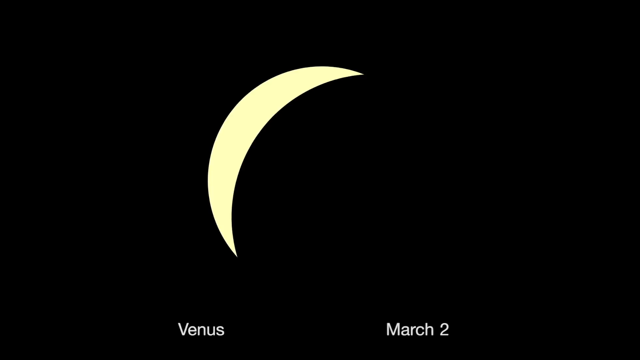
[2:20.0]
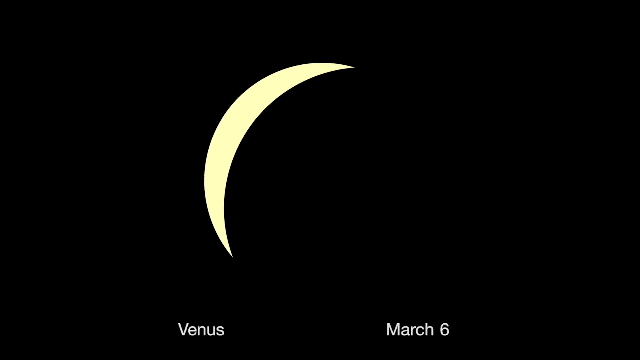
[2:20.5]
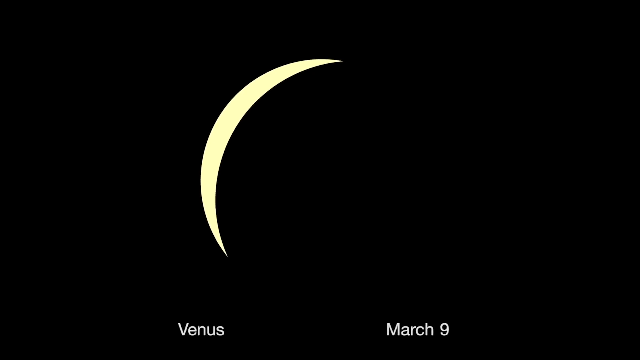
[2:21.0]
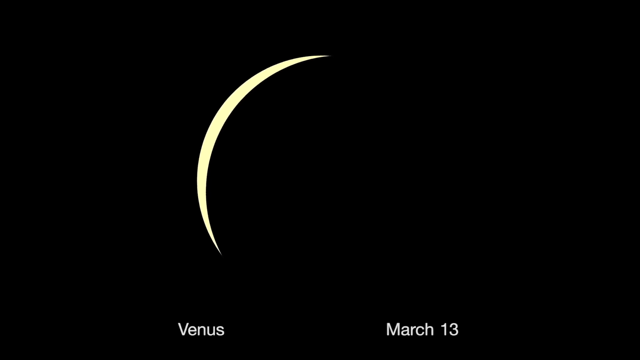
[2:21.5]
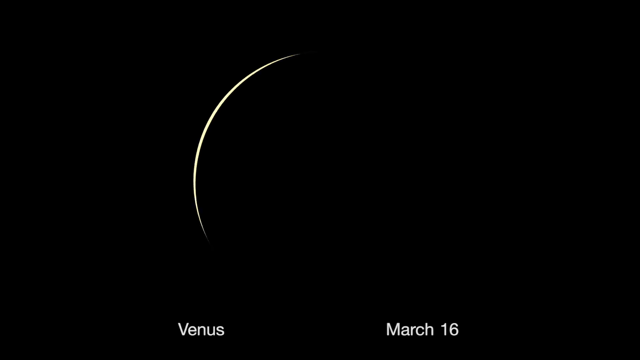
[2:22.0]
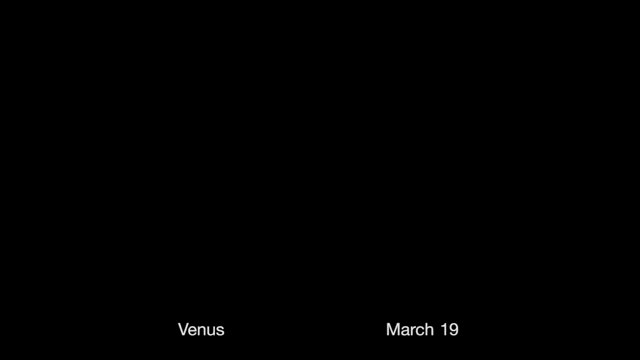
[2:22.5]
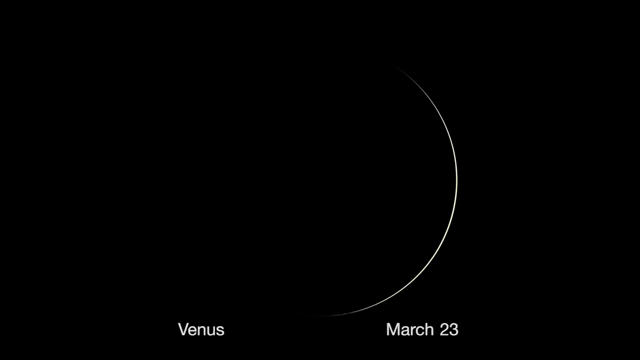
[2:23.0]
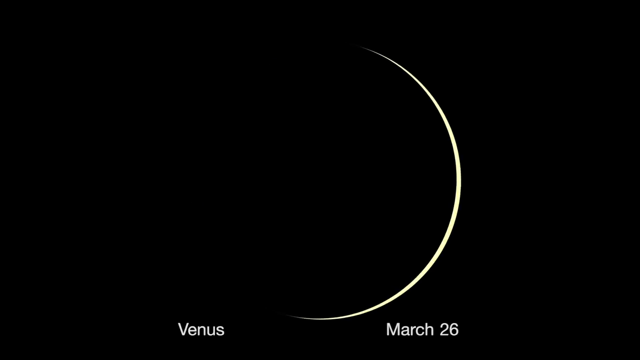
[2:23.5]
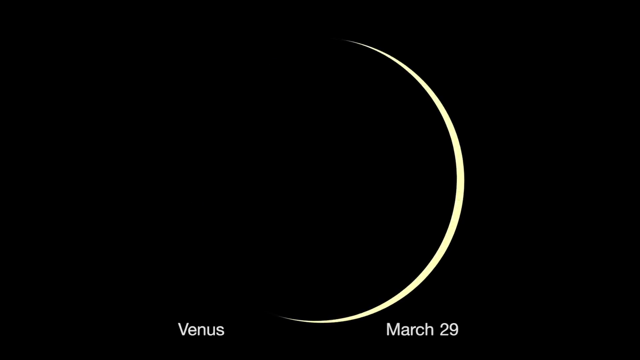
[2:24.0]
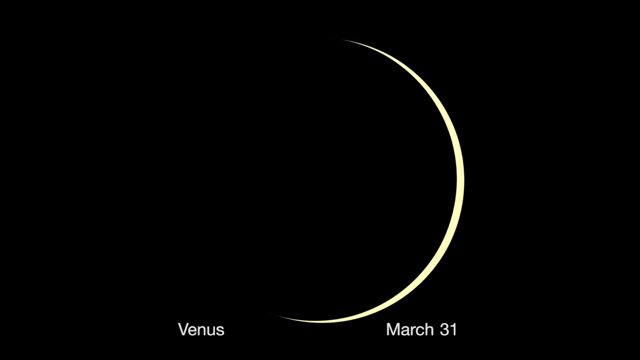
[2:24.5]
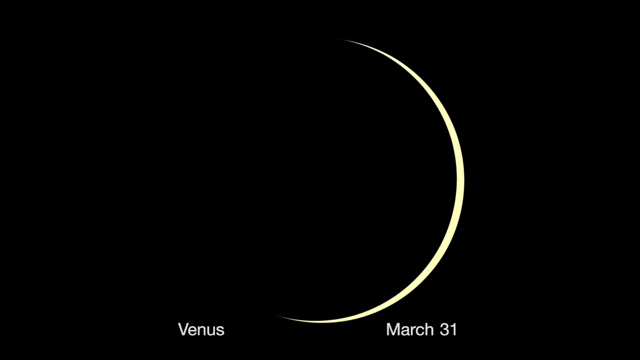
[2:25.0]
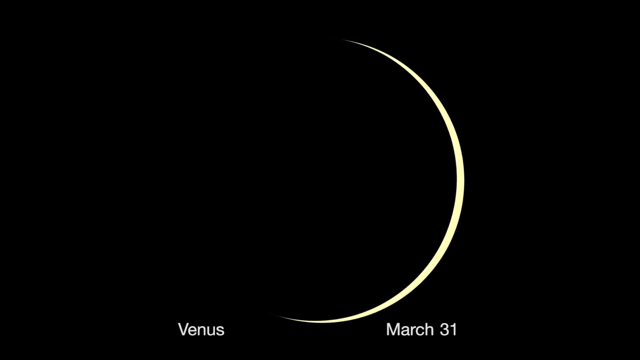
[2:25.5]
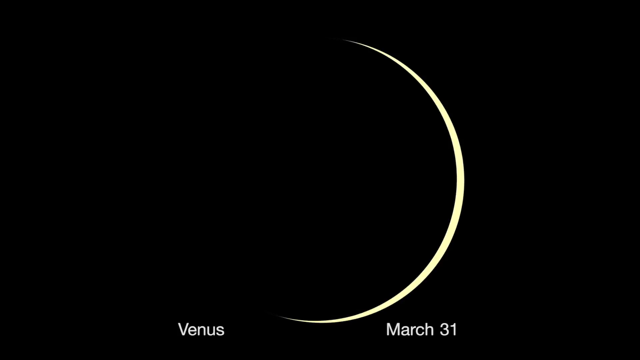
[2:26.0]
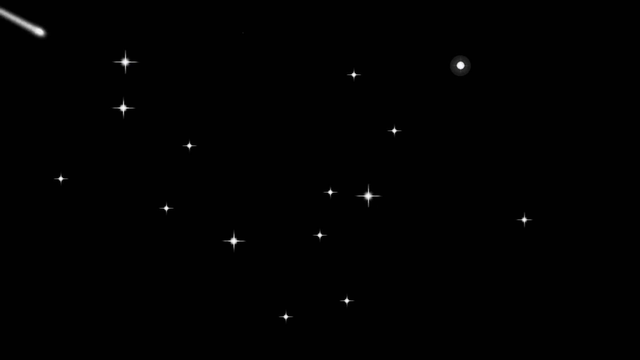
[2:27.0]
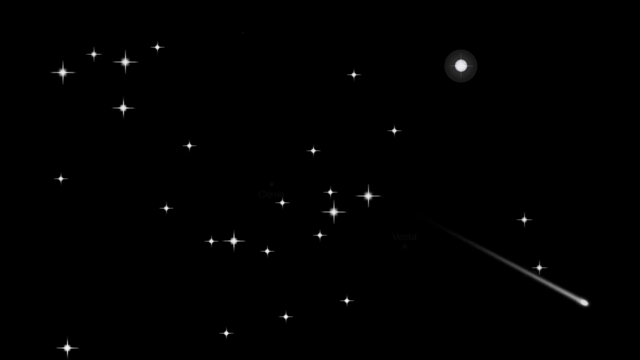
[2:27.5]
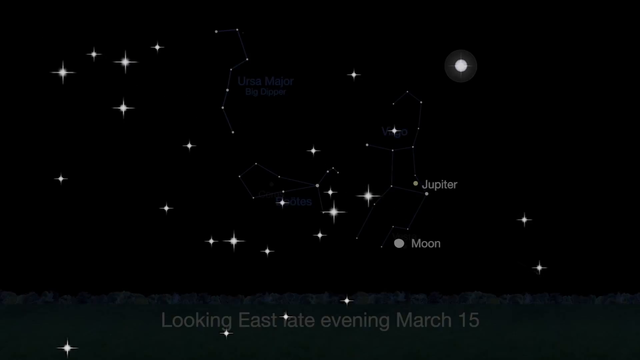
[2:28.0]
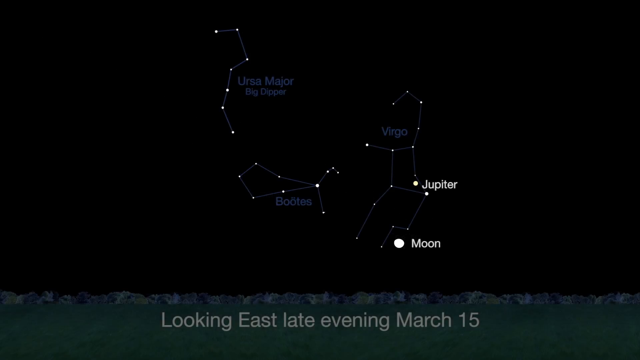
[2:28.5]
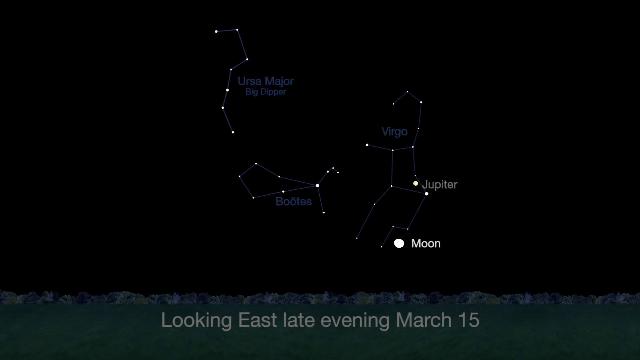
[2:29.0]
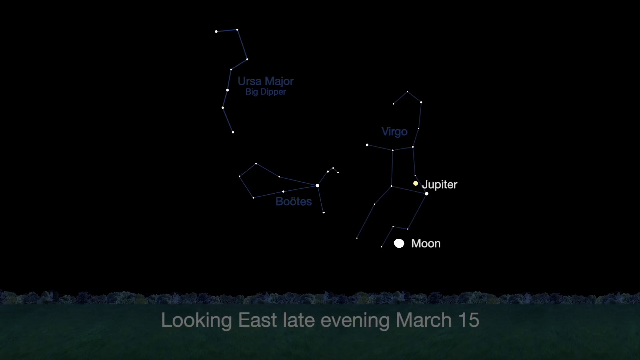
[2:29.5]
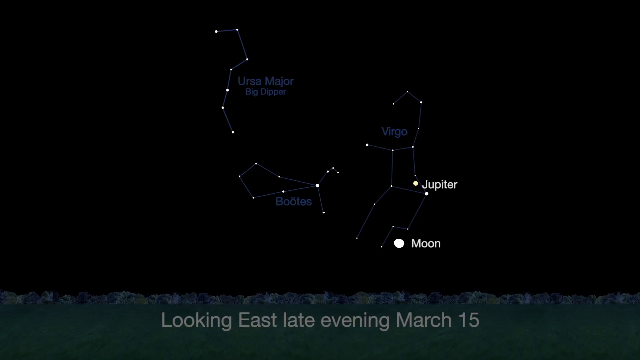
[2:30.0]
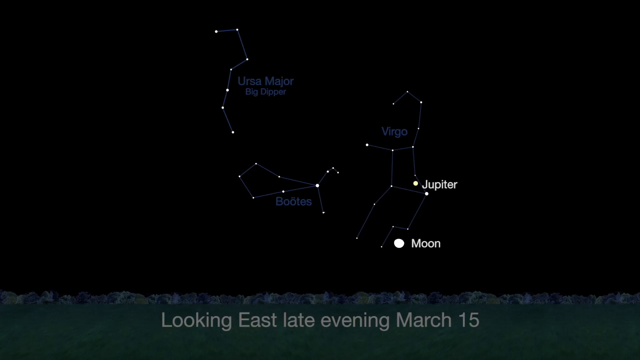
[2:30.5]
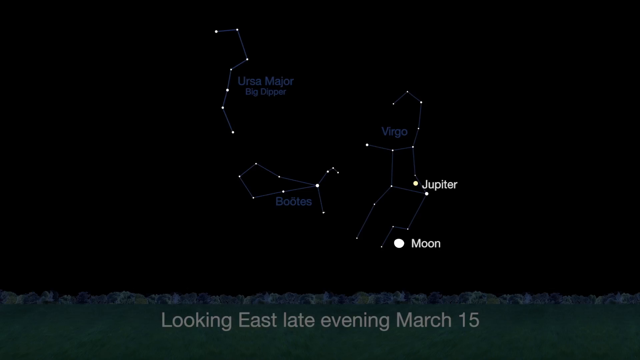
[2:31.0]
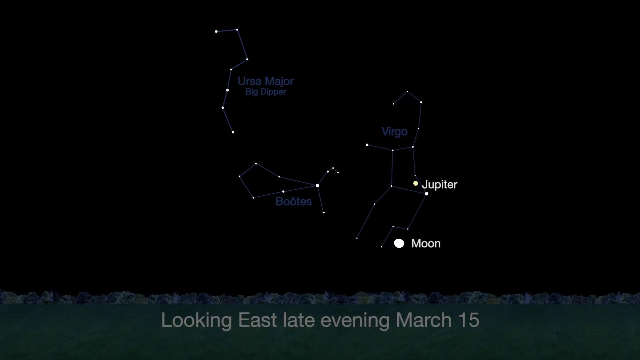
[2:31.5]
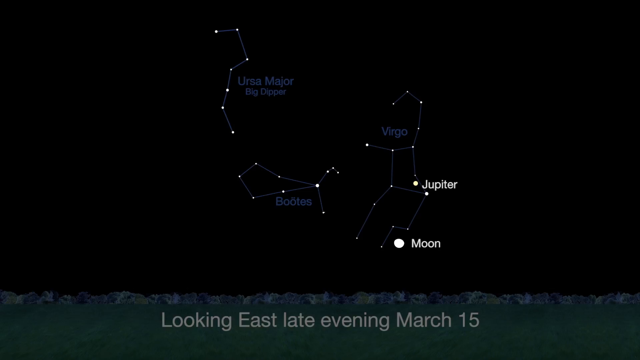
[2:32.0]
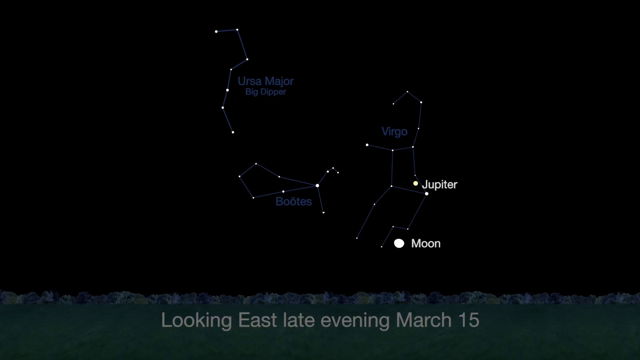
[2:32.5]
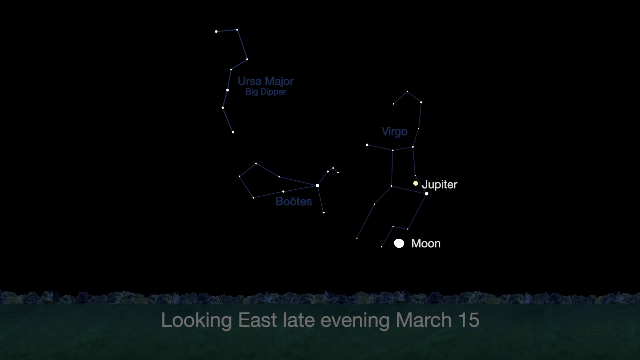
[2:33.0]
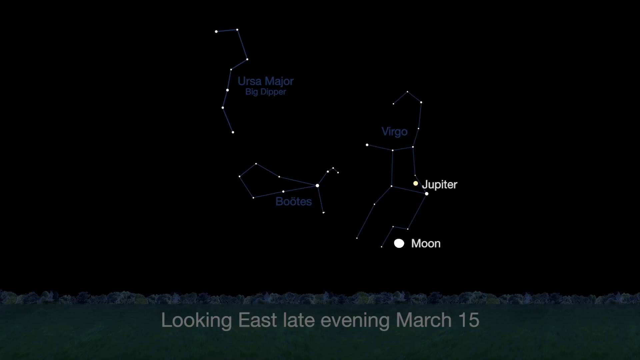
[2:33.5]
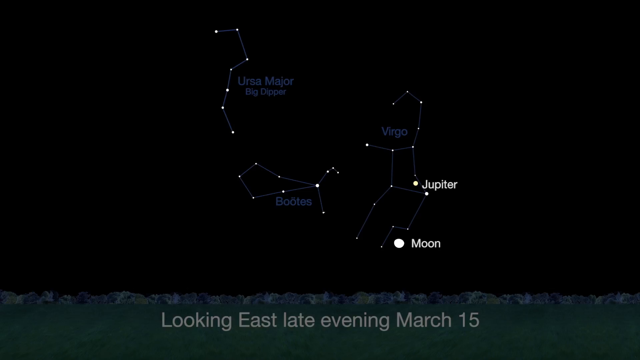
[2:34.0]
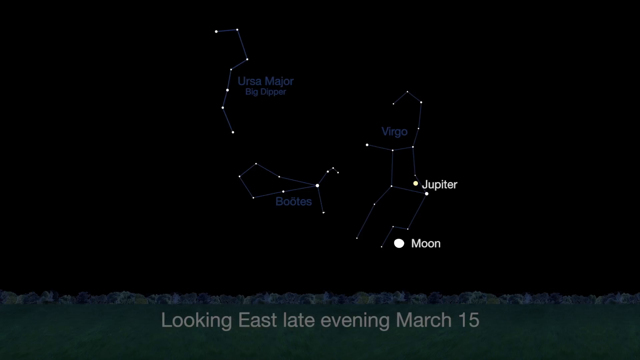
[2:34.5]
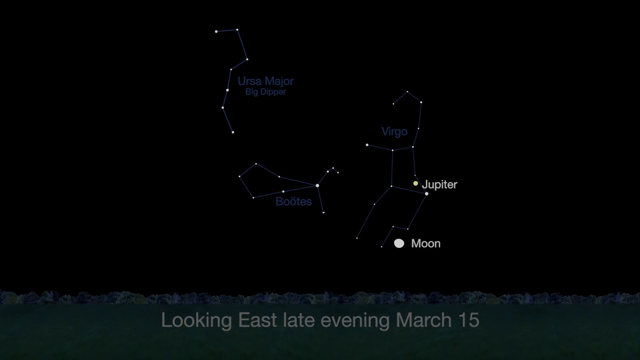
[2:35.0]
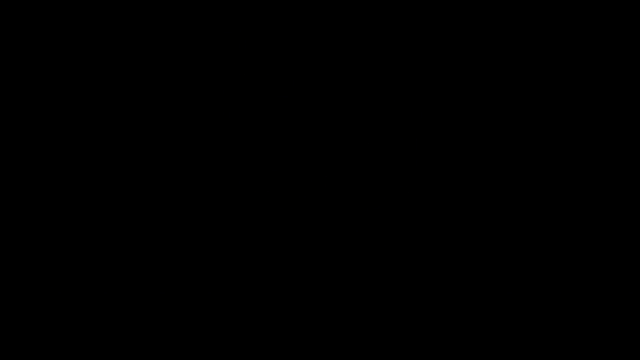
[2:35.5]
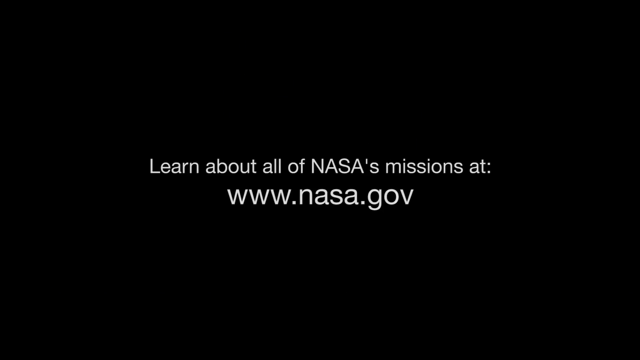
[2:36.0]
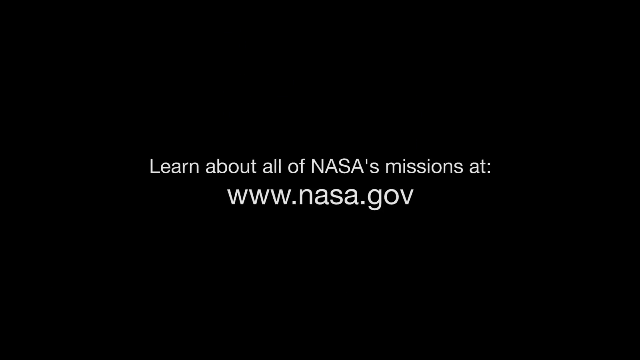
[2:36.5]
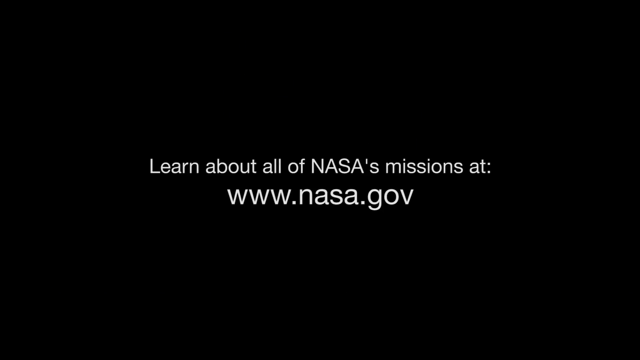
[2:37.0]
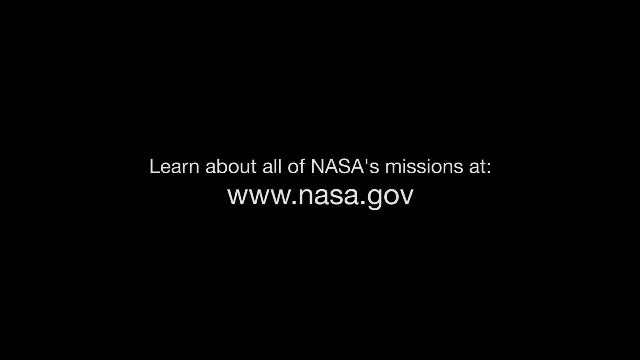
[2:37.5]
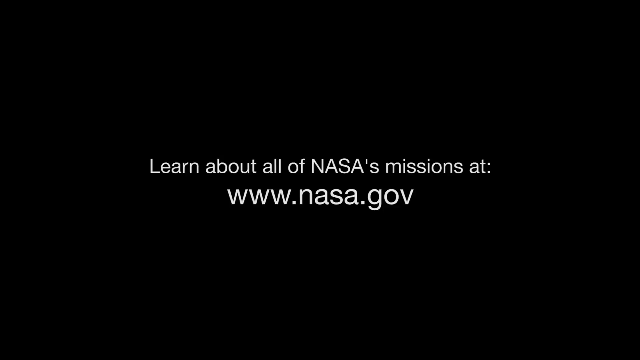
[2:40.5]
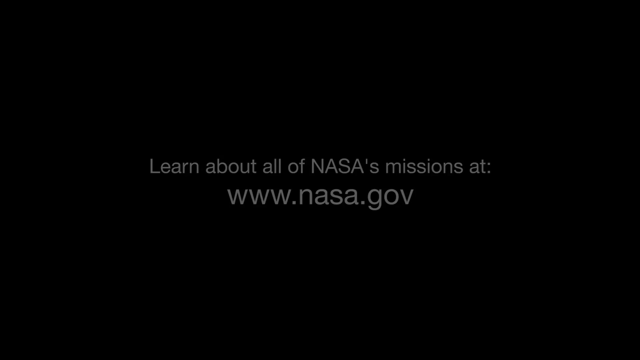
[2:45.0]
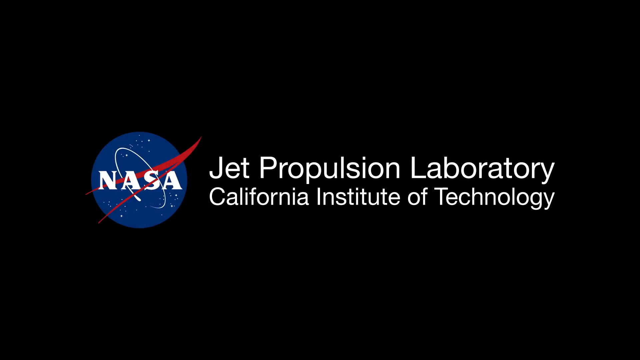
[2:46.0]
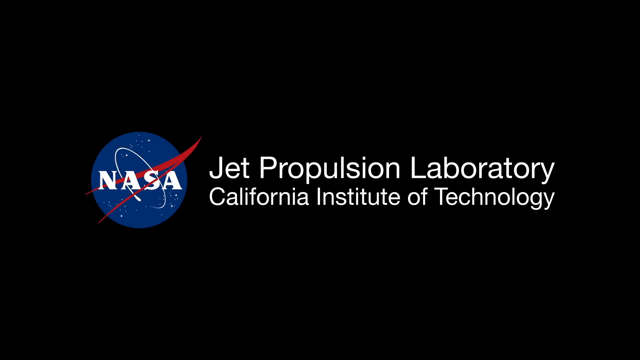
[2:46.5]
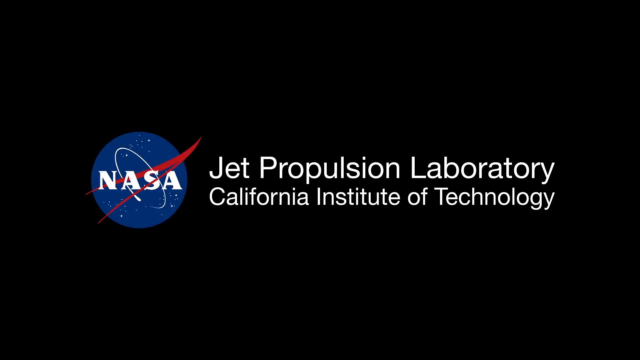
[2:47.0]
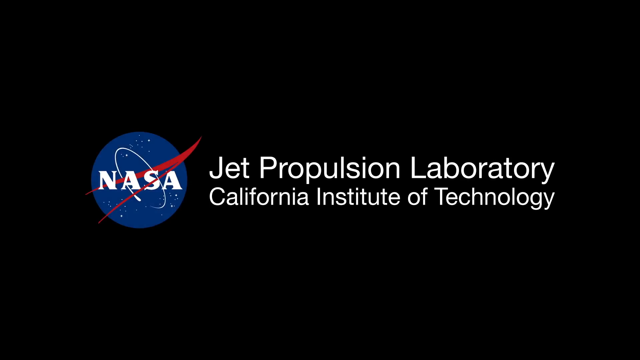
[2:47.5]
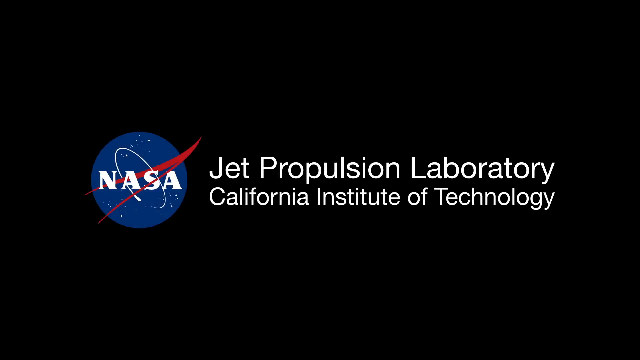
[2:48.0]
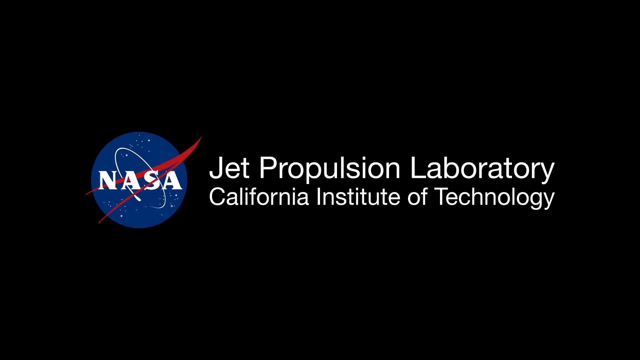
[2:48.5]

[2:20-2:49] The planet Venus is very slowly covered, by the Sun or possibly the planet, with less and less of it visible, until it eventually comes back from the right. This seems to start March 1st; Venus is not seen from about March 17th until March 22nd, and then starts appearing again. The video then cuts to pictures of the sky showing a yellow dot labeled Jupiter and a white dot labeled the Moon, with text at the bottom reading "looking east late evening March 15th". At the end, white text on a black background reading "learn all about all of NASA's missions at www.nasa.gov" serves as the end screen.